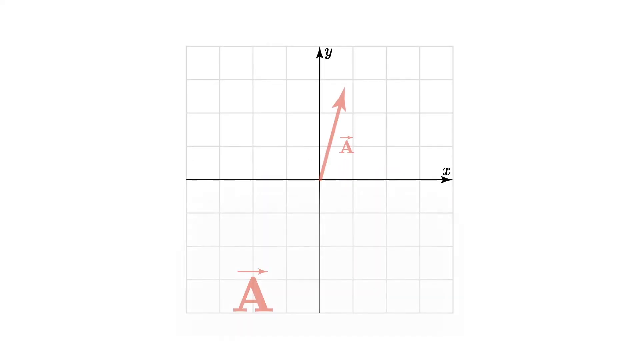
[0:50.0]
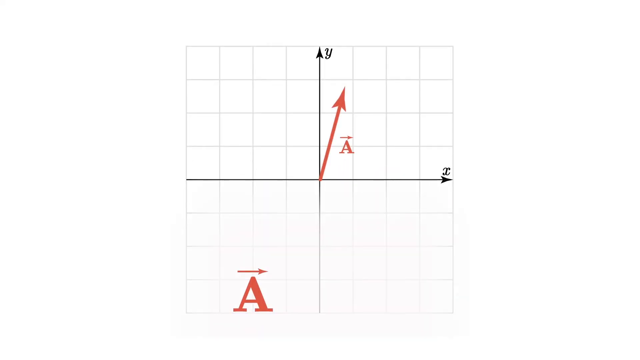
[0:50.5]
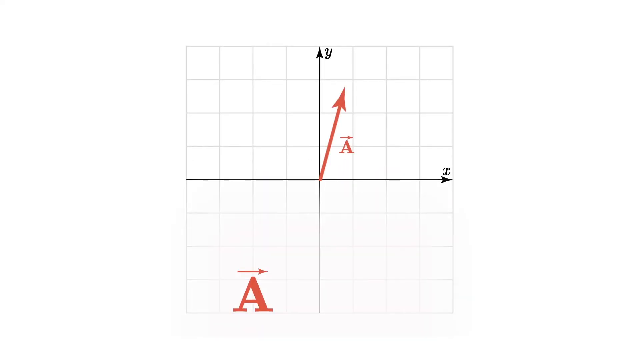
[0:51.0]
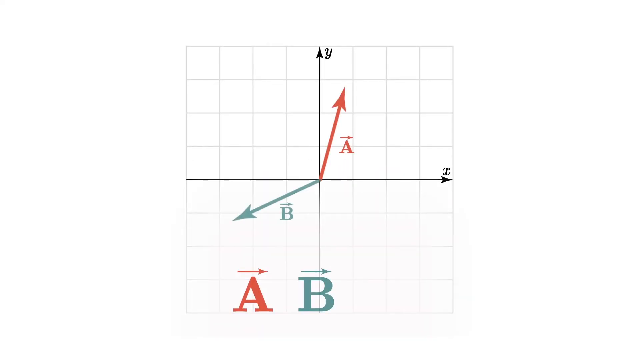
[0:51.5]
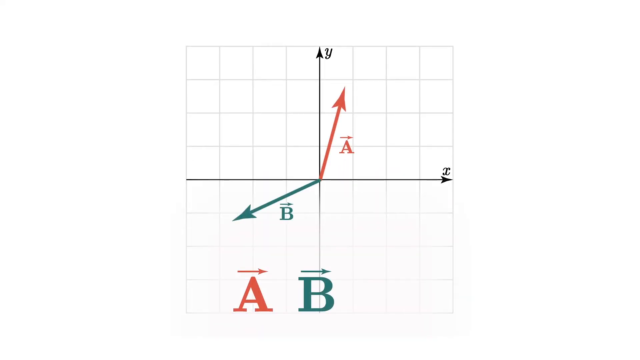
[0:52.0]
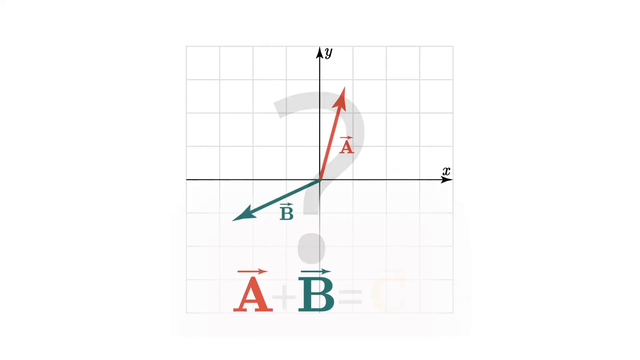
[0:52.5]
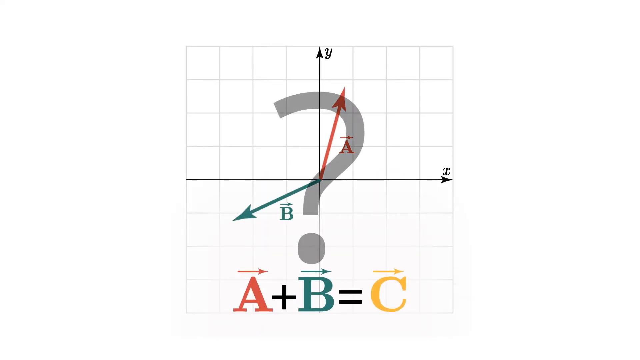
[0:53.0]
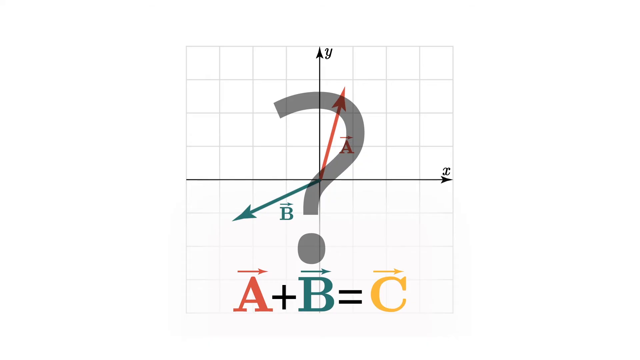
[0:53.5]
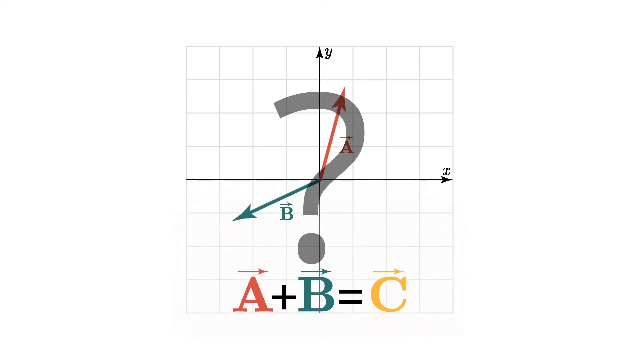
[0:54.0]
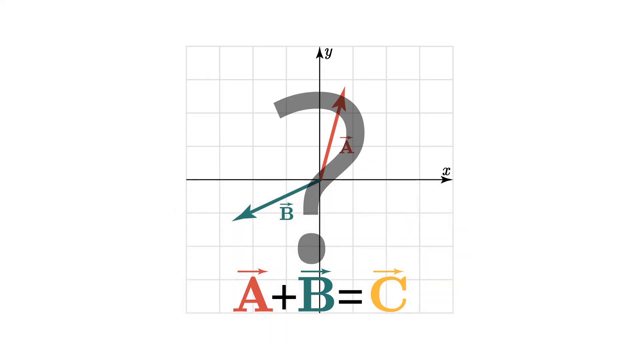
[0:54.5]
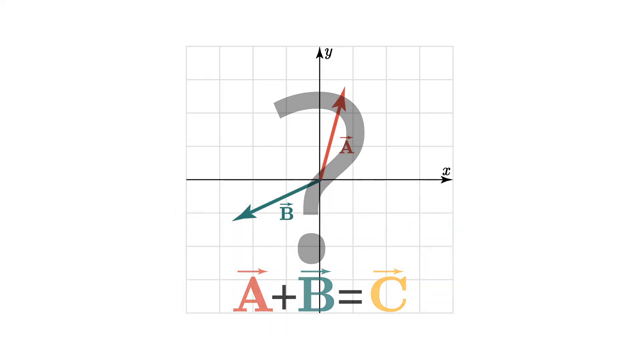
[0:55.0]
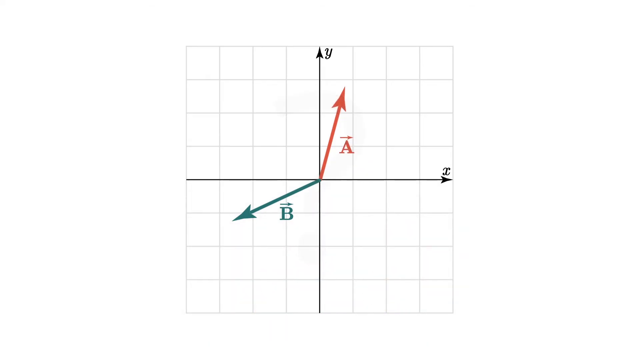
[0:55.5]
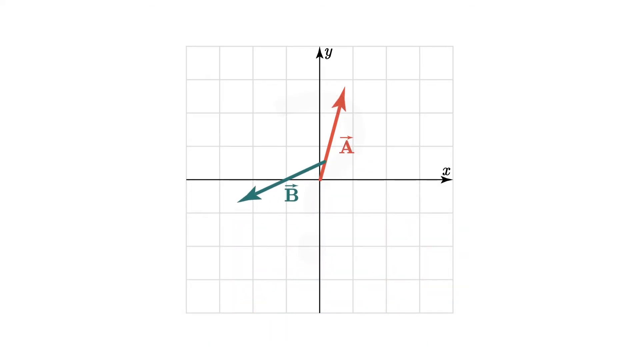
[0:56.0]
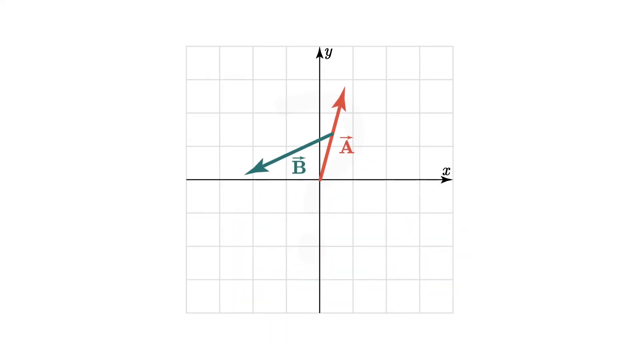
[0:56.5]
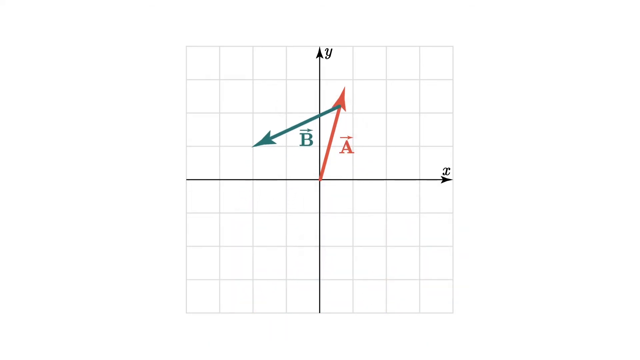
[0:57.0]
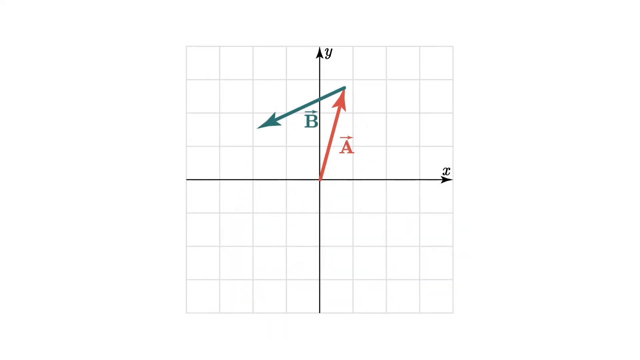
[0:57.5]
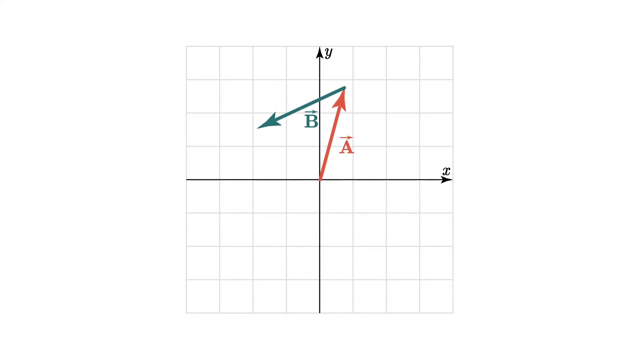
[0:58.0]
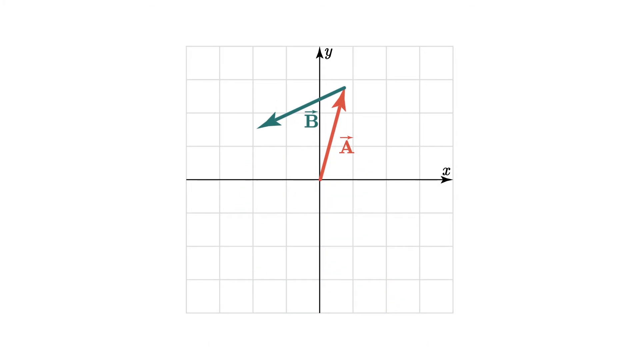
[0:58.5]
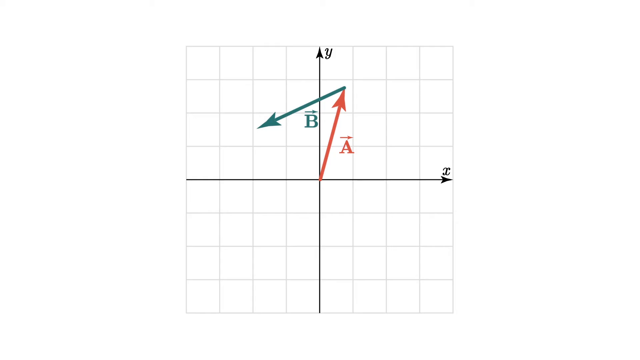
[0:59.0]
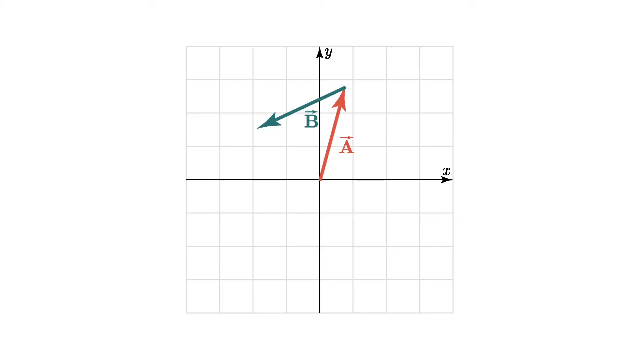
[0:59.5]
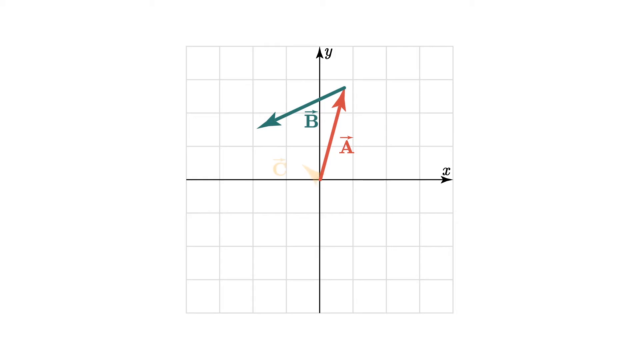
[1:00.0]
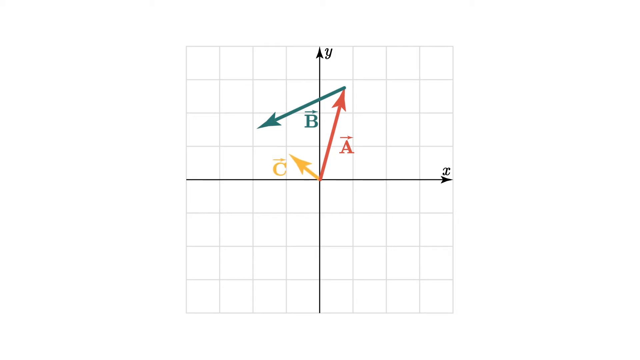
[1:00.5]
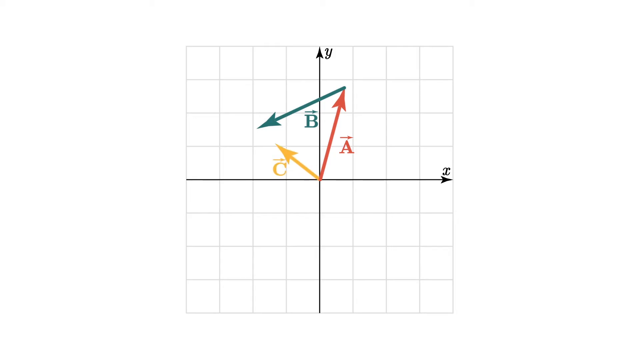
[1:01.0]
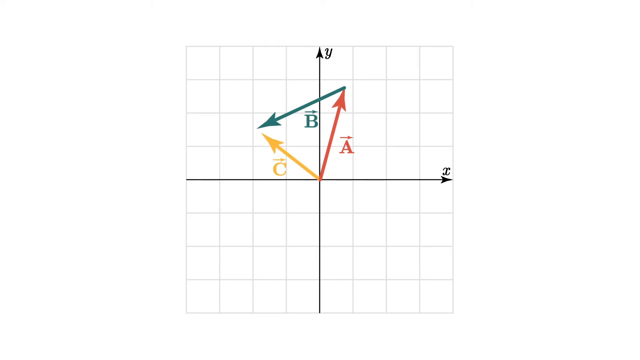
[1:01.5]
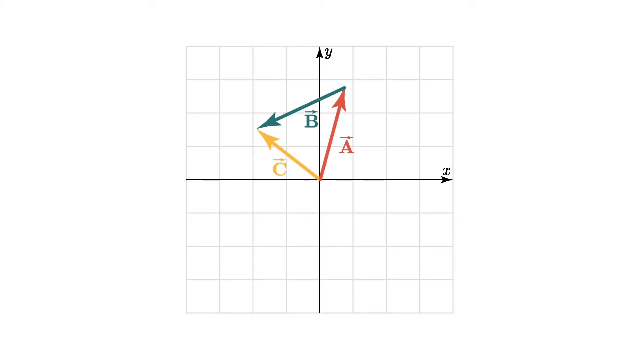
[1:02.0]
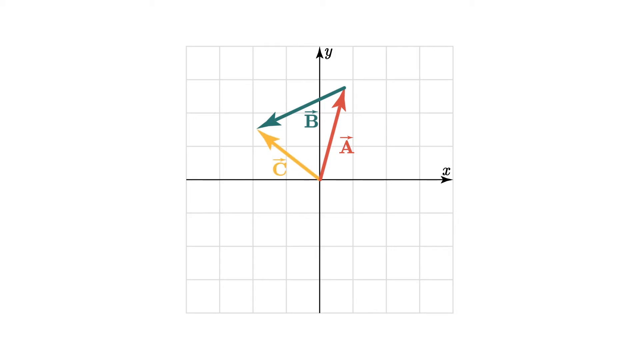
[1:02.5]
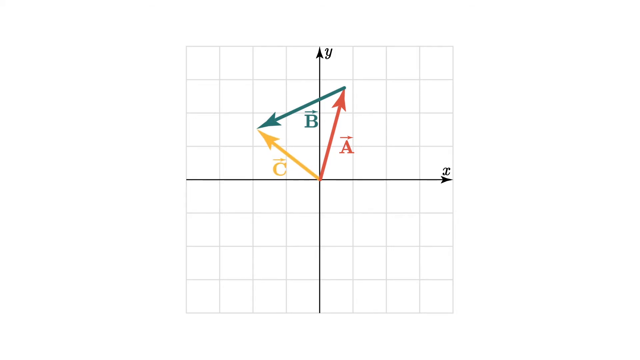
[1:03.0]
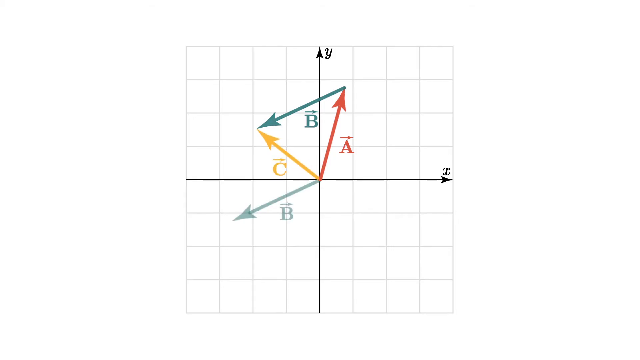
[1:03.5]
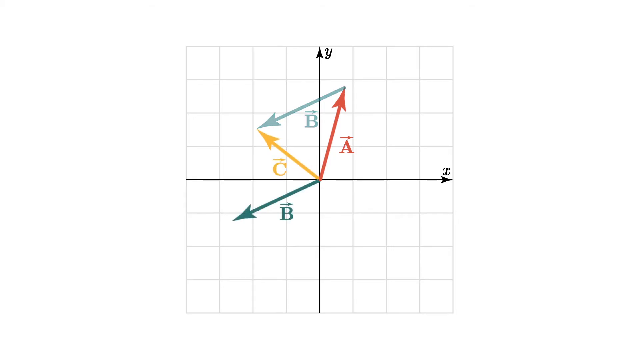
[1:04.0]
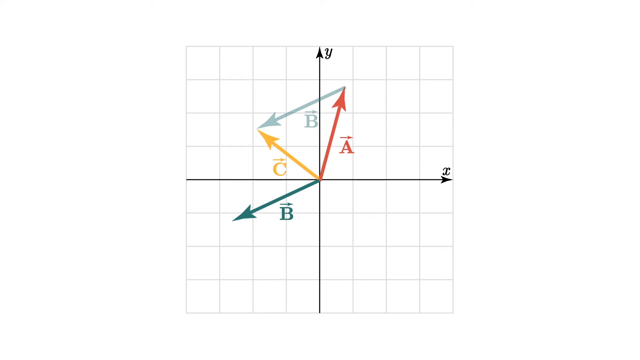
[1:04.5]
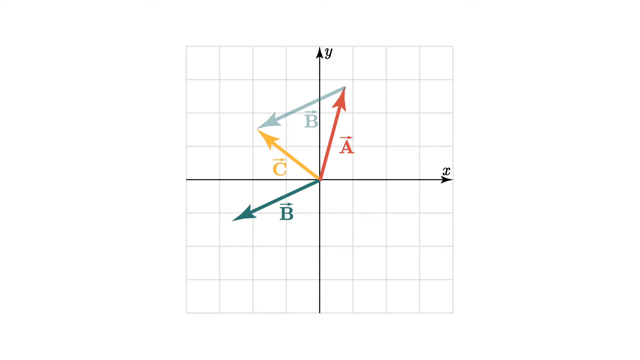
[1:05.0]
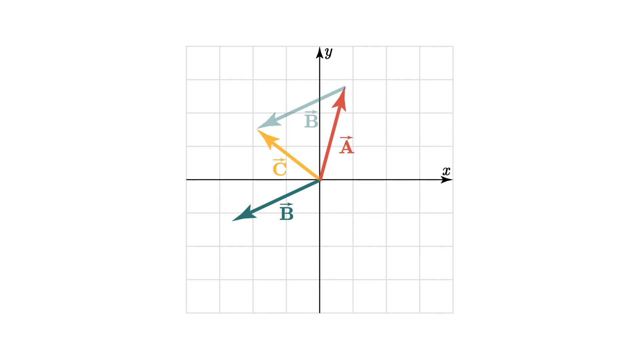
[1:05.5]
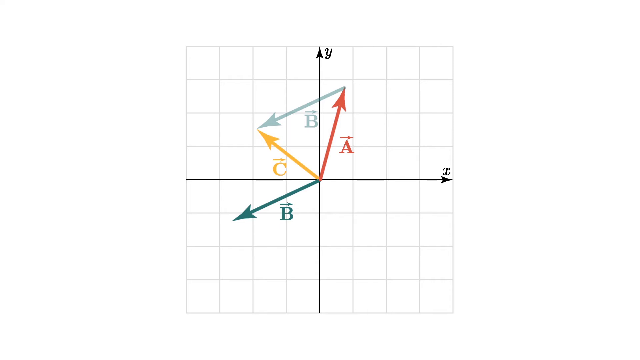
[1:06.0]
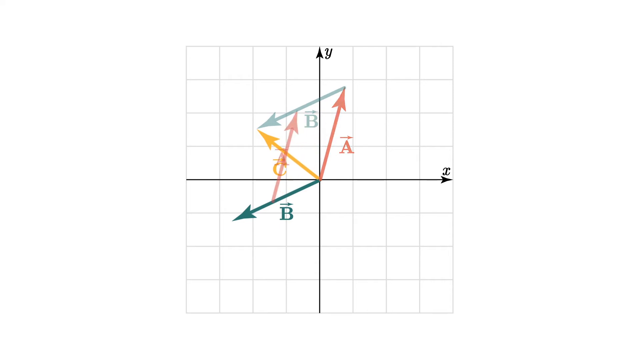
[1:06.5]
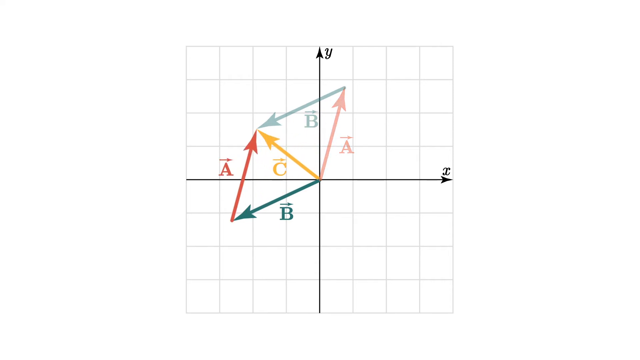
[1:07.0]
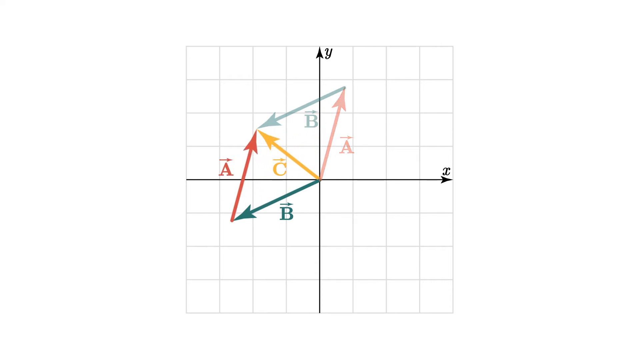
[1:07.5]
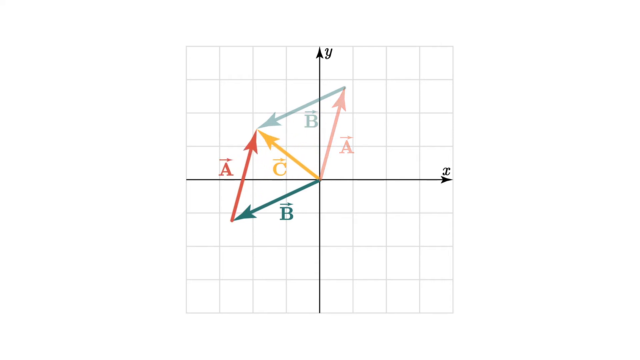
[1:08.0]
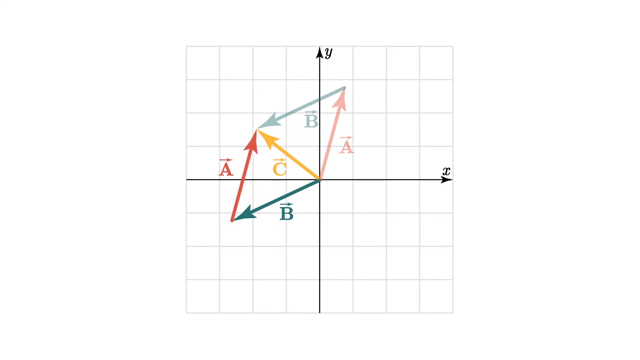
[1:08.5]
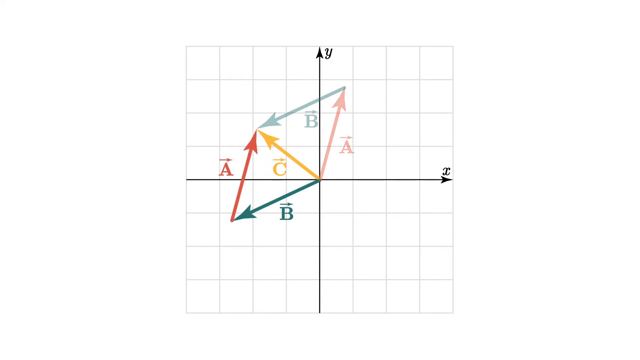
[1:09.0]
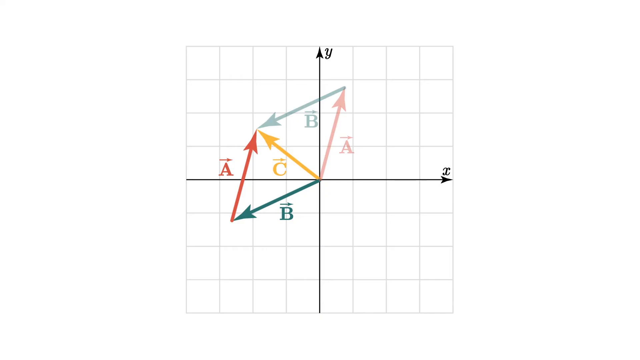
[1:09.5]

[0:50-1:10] This science video, called Vectors, shows grid paper eight squares across and eight squares down, with X and Y axes in the middle. A diagonal arrow in a kind of rust orange color comes out of the positive side between the X and Y axis in the first square, with a capital A across it or next to it on the right side, topped by an arrow going horizontally to the right. The same kind of A is down in the left-hand middle part of the four squares on that side, between the second and third. Suddenly a teal B arrow pops up going diagonally down from the X and Y origin on the negative, left side, running from the first box diagonally down, with a teal capital B and an arrow going to the right. A big, kind of gray and faint question mark shows up, and then the screen says "A plus B equals C".